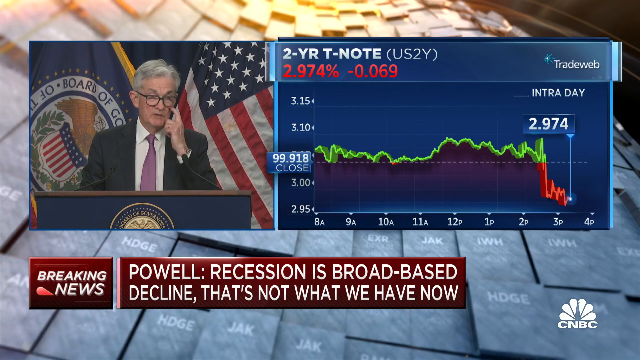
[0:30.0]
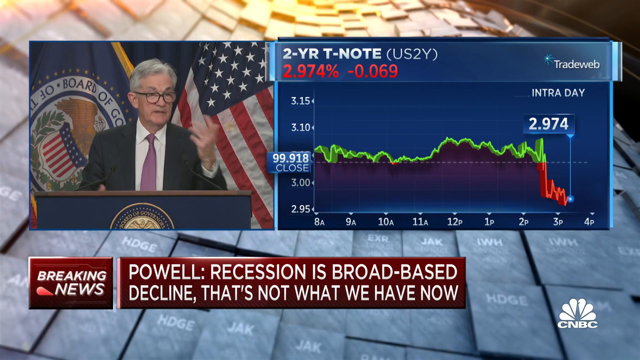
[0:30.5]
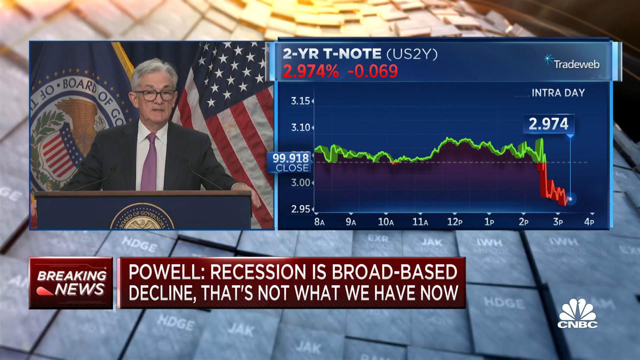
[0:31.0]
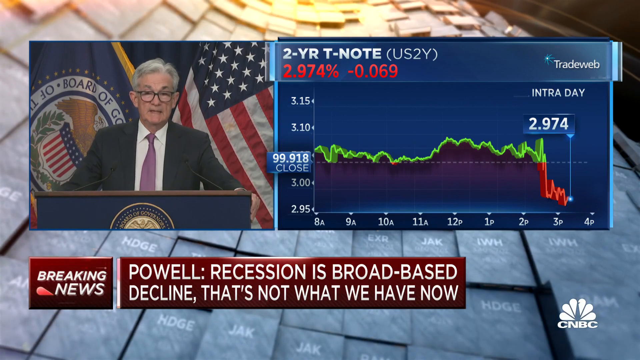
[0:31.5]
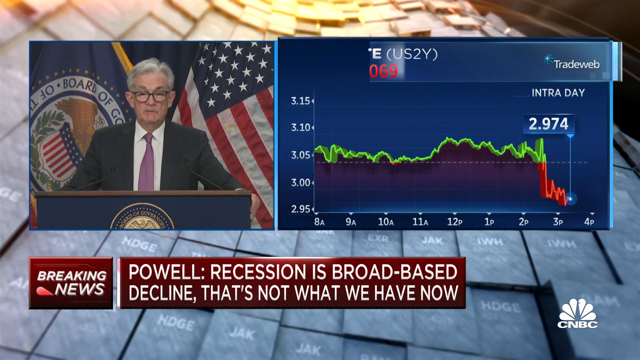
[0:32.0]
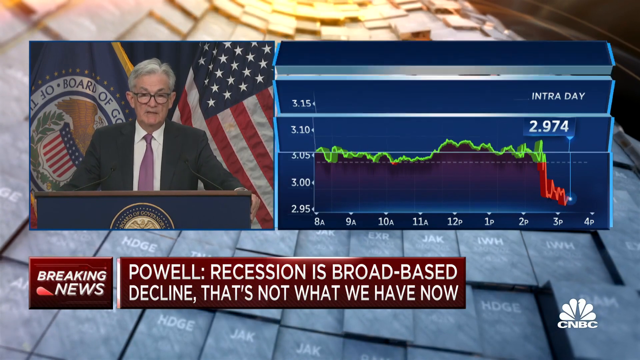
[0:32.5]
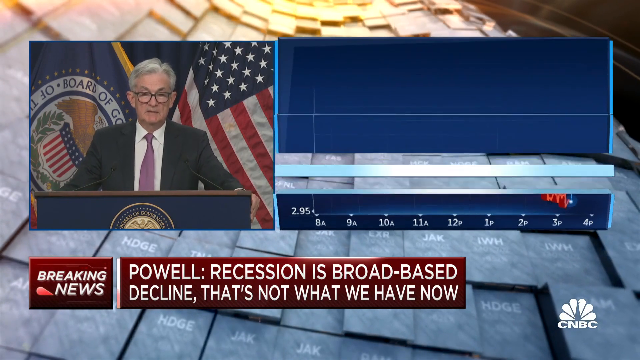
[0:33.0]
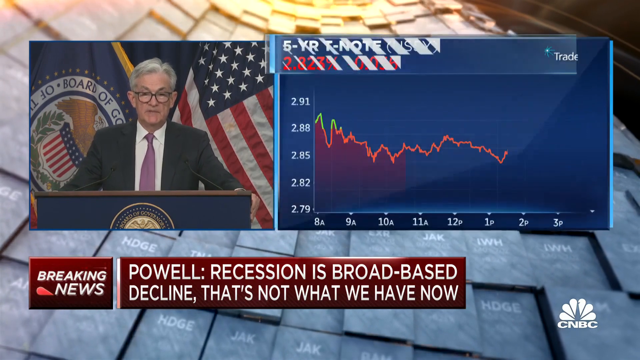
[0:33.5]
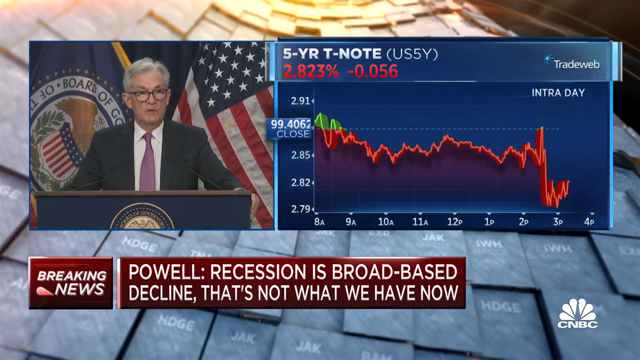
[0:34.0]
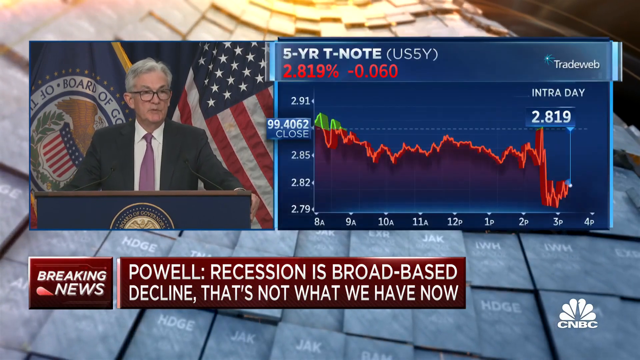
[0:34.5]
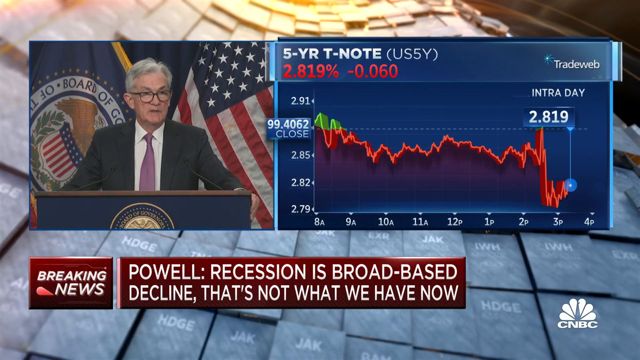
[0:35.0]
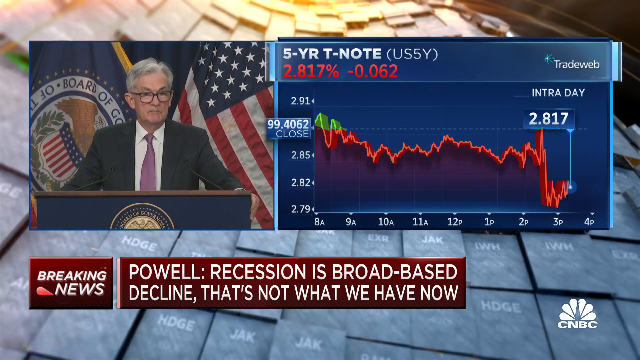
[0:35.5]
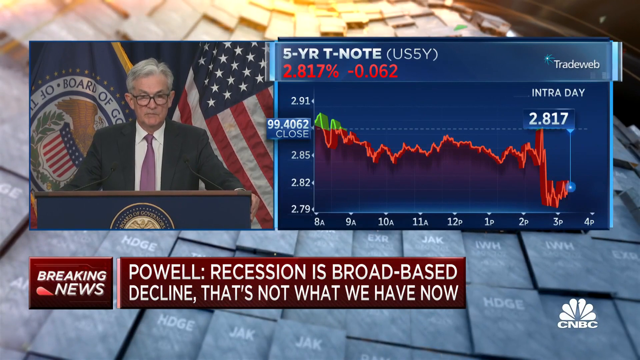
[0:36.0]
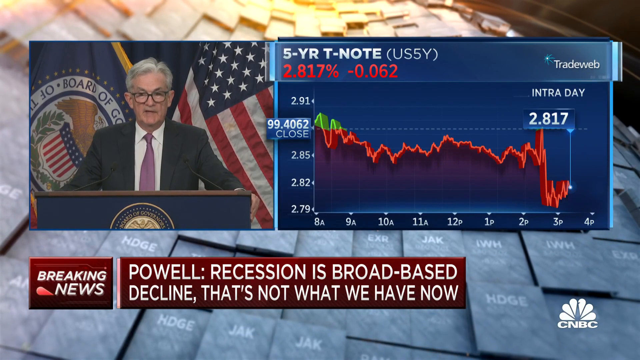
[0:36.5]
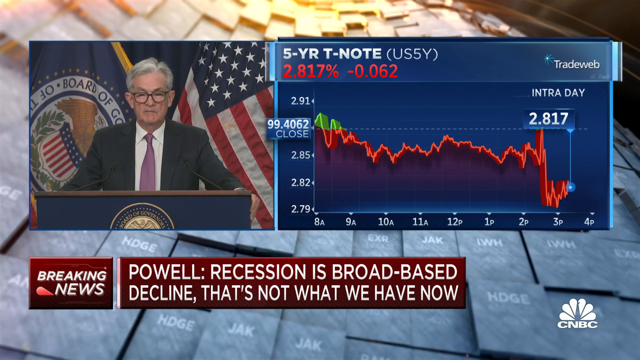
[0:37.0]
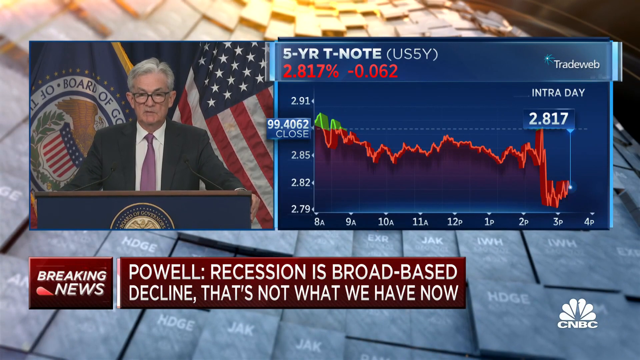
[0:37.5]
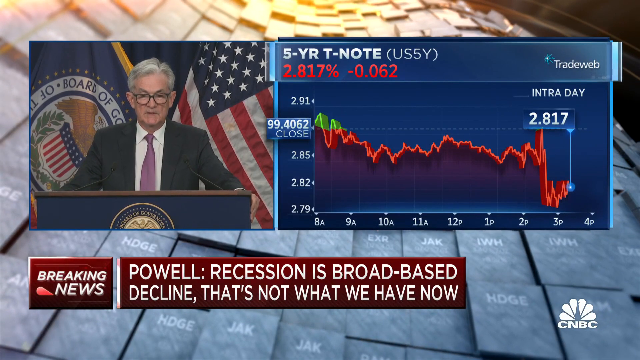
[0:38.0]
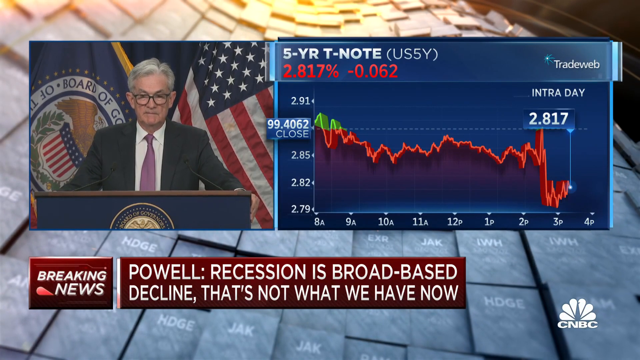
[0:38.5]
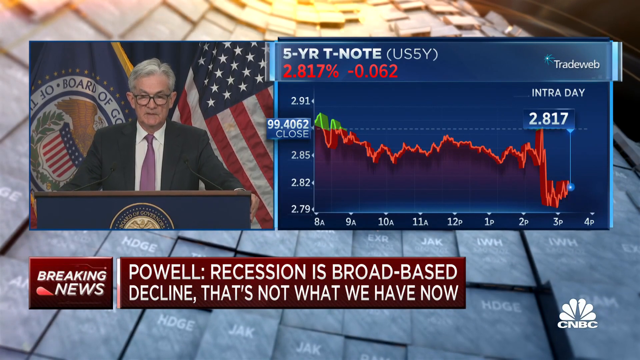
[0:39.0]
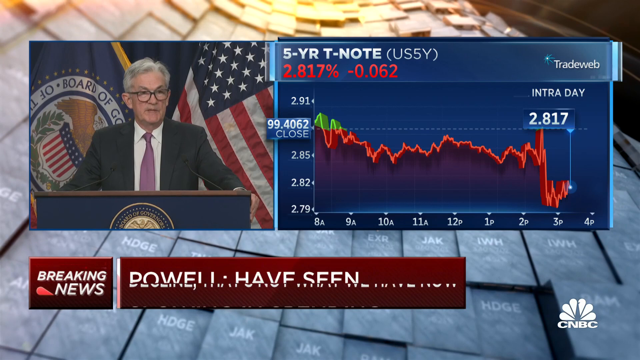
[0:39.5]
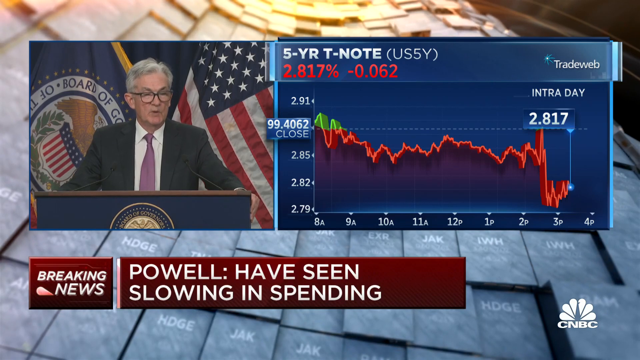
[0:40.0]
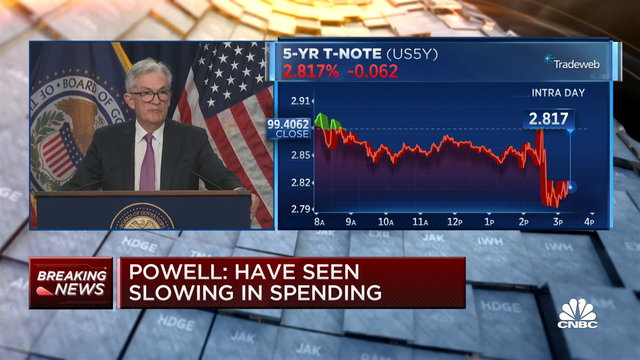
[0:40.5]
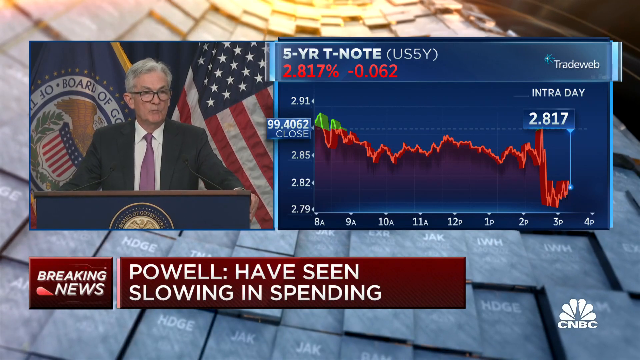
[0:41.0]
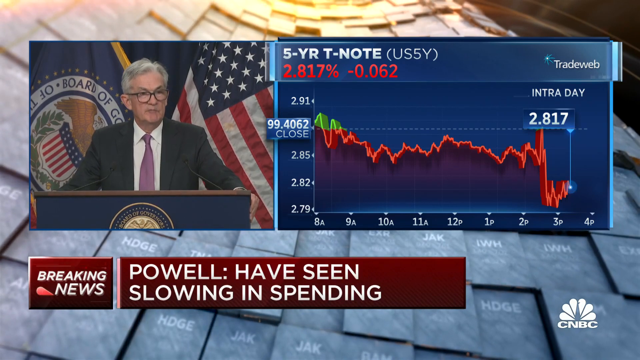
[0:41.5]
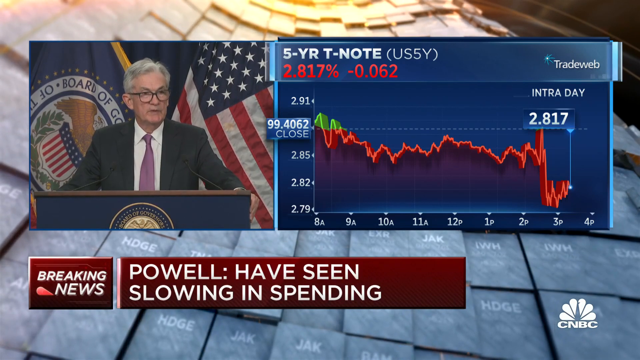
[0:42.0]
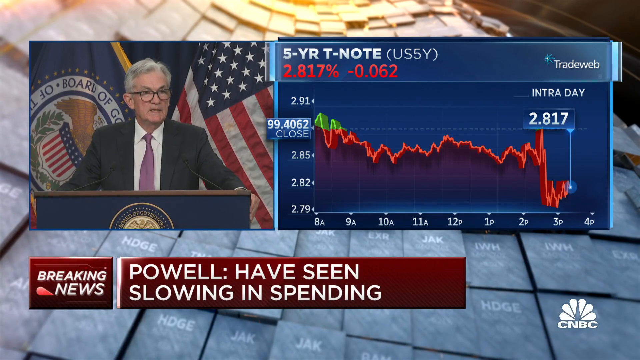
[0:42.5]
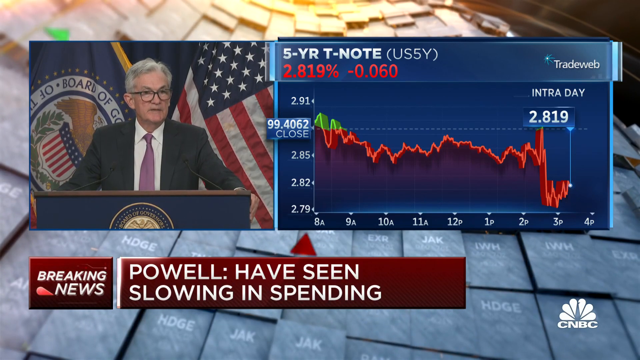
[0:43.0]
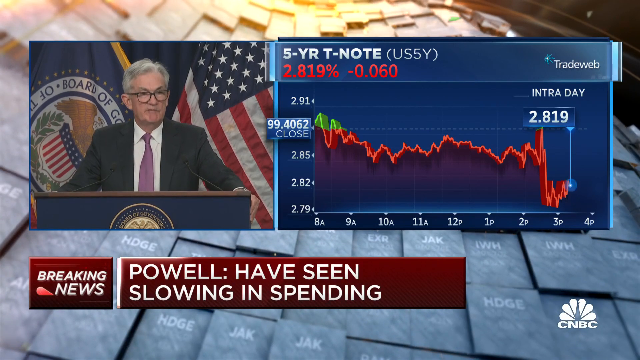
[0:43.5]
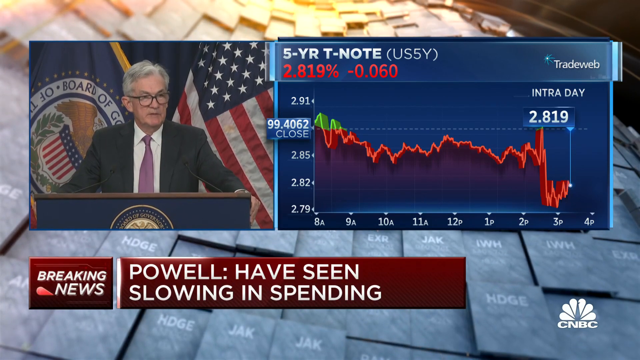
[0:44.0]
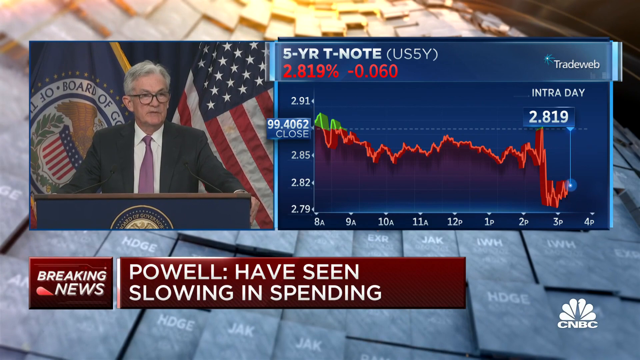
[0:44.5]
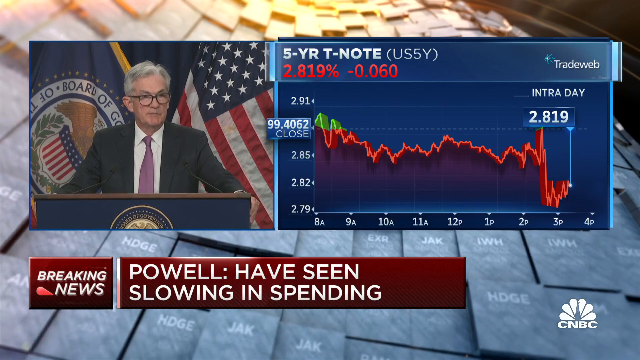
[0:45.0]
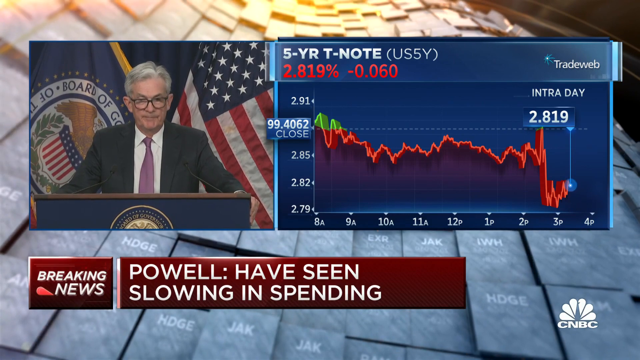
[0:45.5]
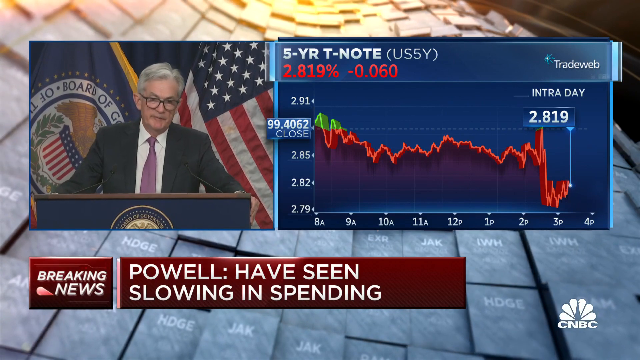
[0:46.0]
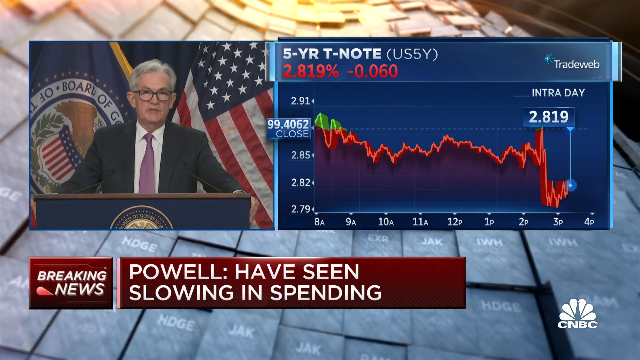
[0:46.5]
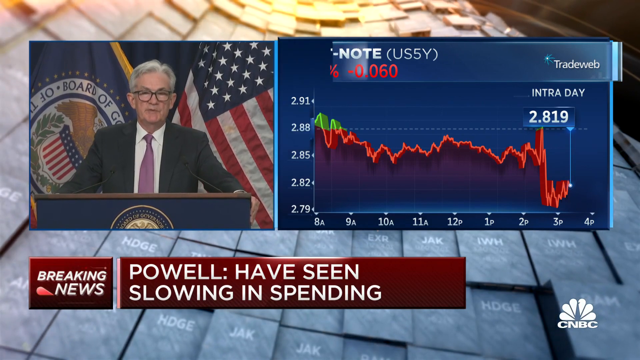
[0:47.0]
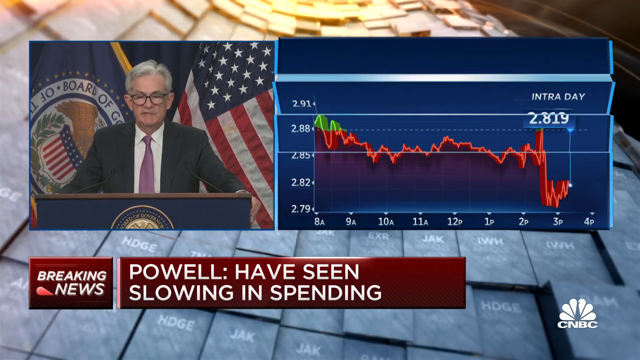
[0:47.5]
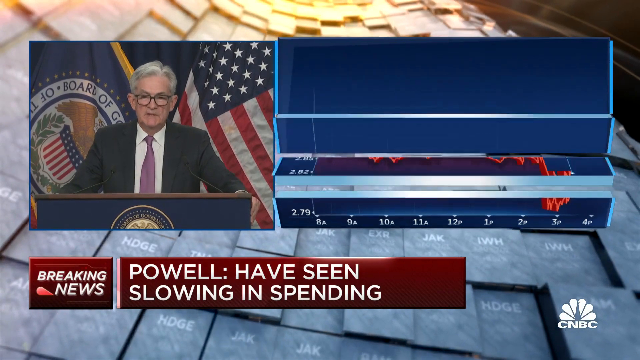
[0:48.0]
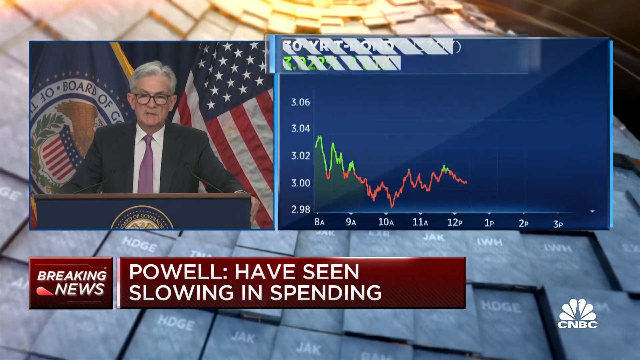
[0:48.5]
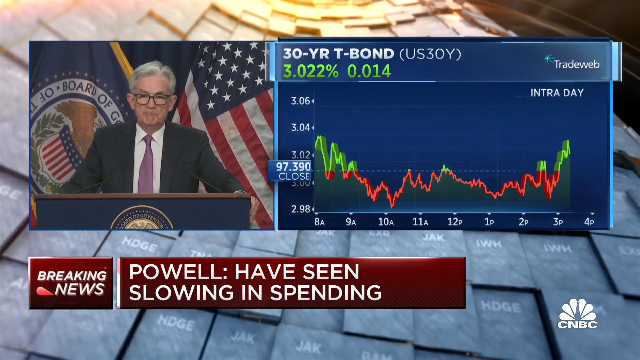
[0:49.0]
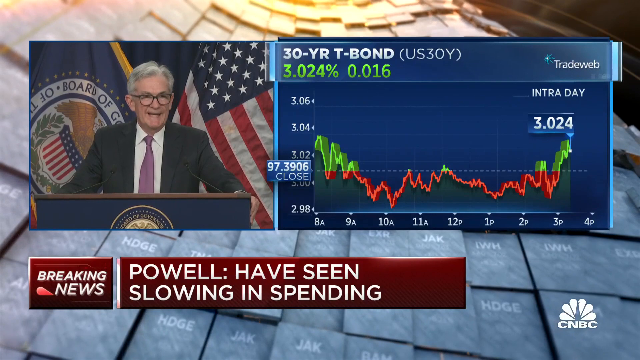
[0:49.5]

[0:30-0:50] All of the yields are declining in CNBC's live breaking news coverage. An intraday graph of the Treasury note shows it starting out at over 3 and falling steadily, down to 2.817. Chairman Powell says that there has been a slowdown in spending.